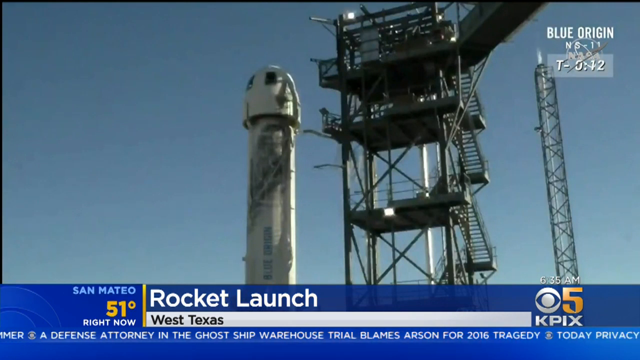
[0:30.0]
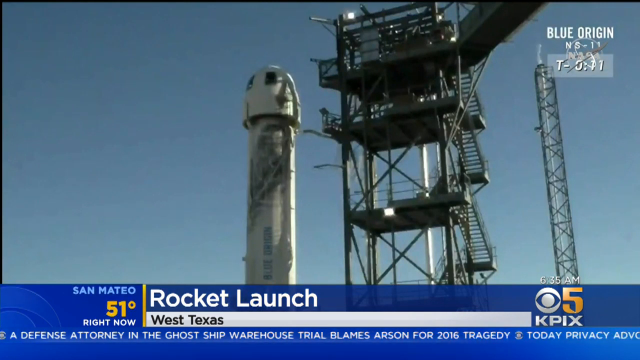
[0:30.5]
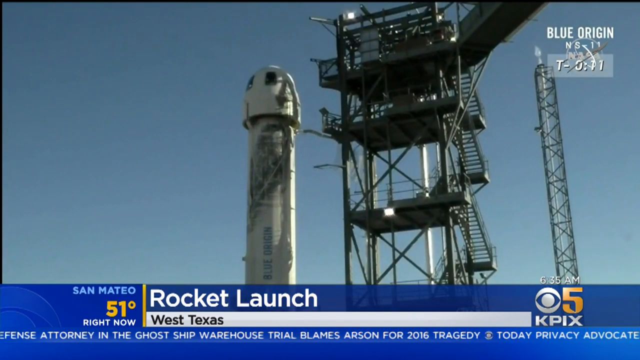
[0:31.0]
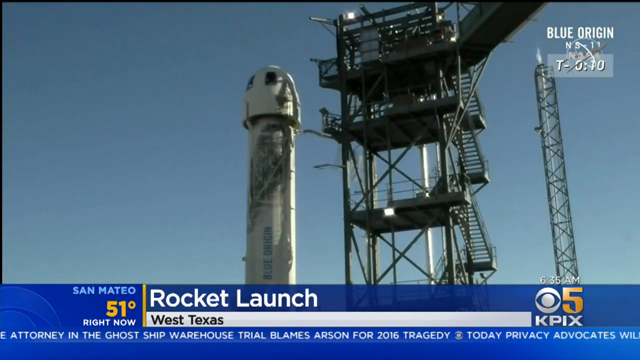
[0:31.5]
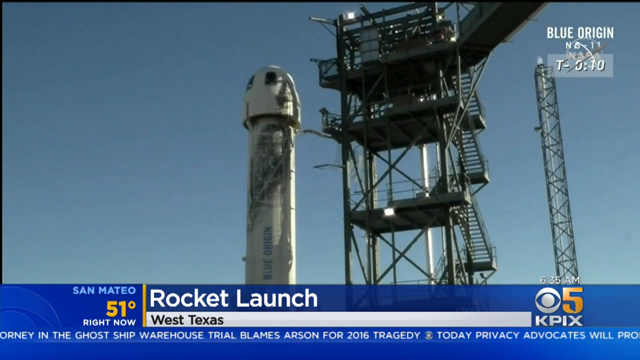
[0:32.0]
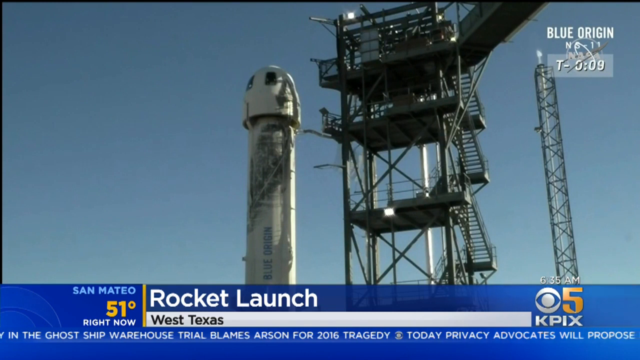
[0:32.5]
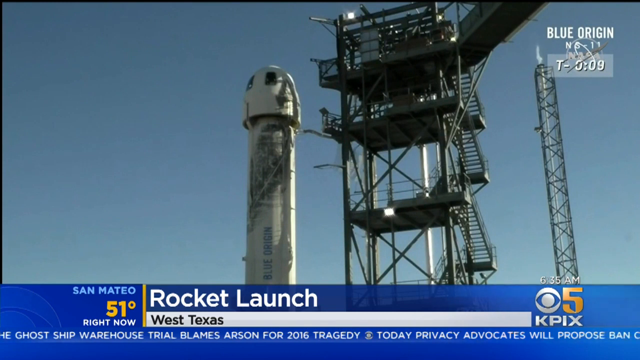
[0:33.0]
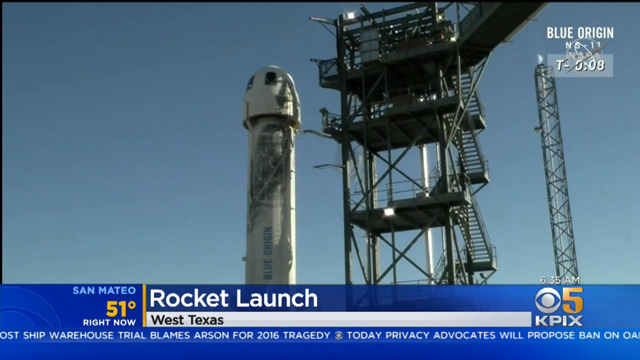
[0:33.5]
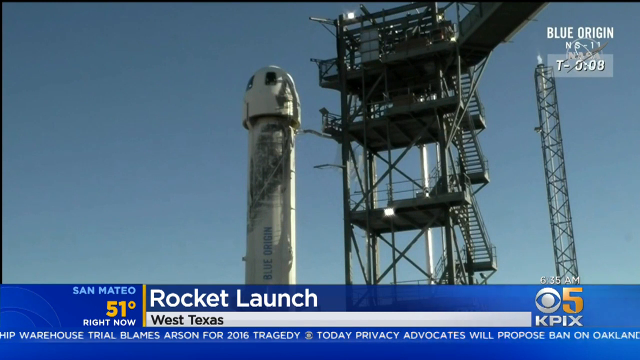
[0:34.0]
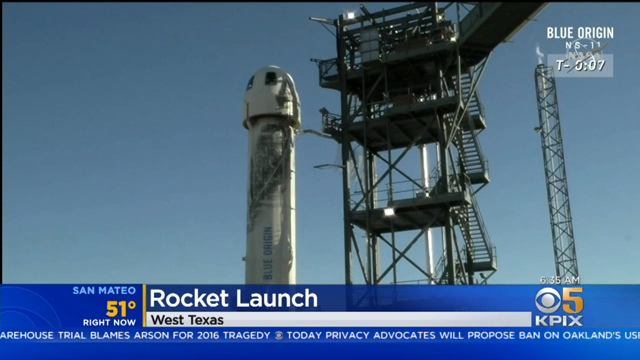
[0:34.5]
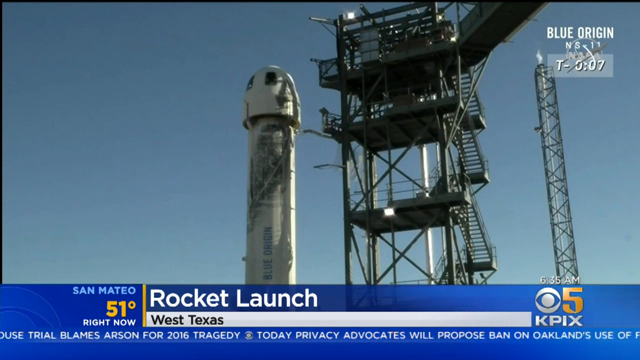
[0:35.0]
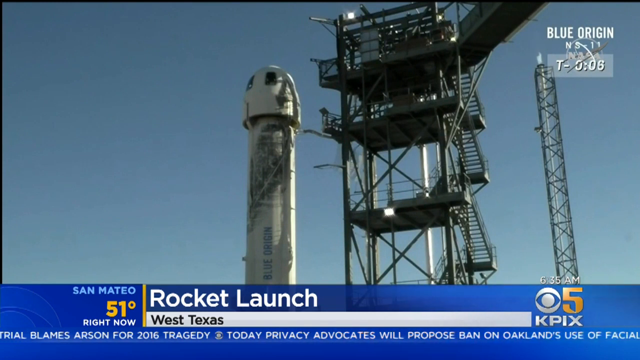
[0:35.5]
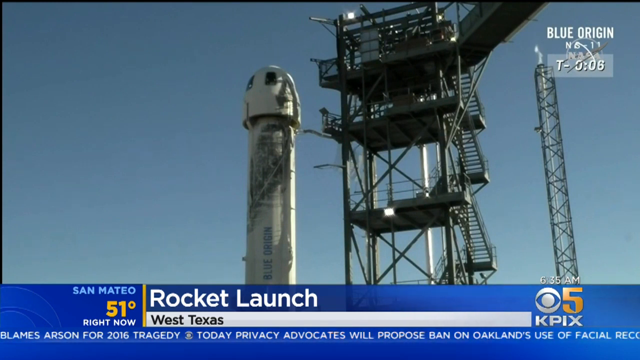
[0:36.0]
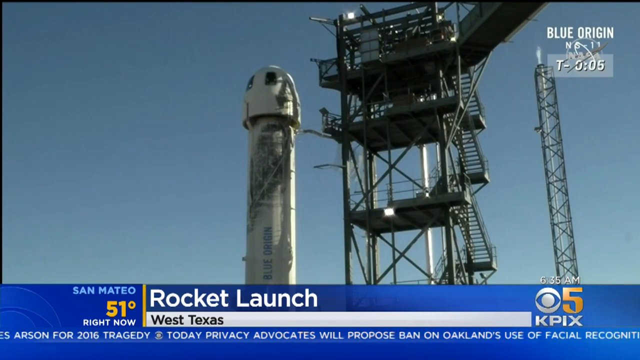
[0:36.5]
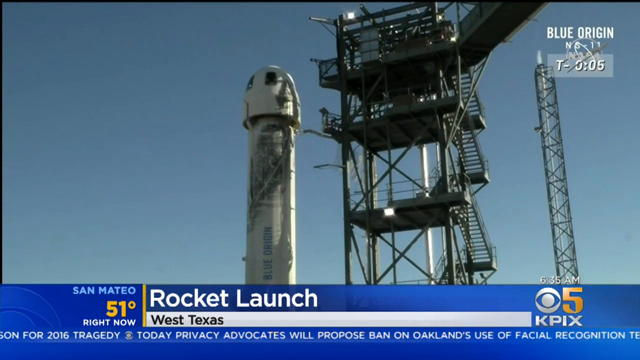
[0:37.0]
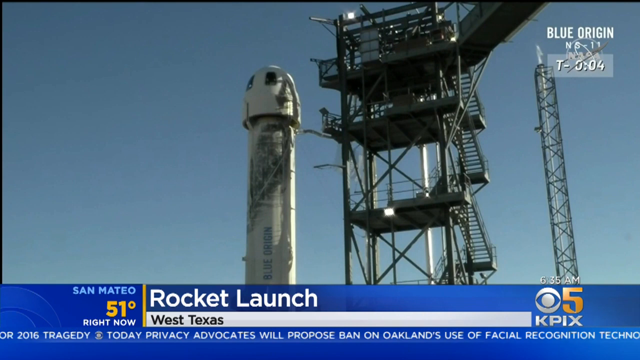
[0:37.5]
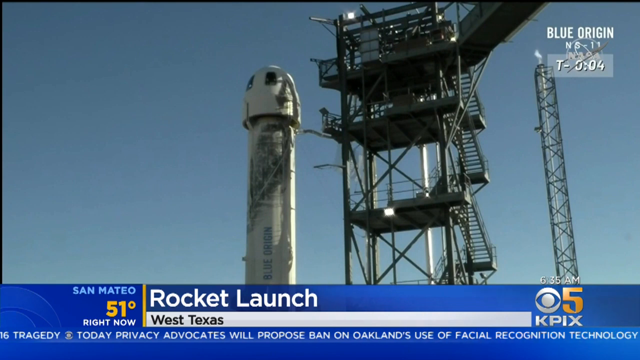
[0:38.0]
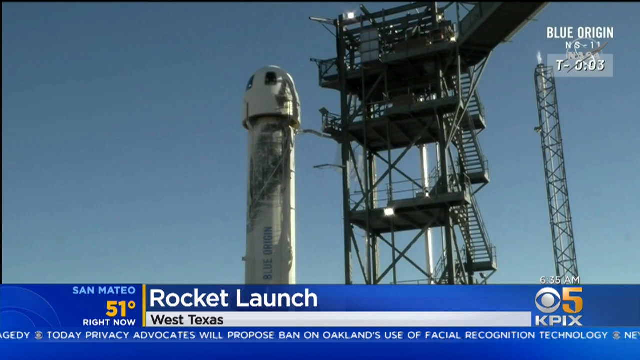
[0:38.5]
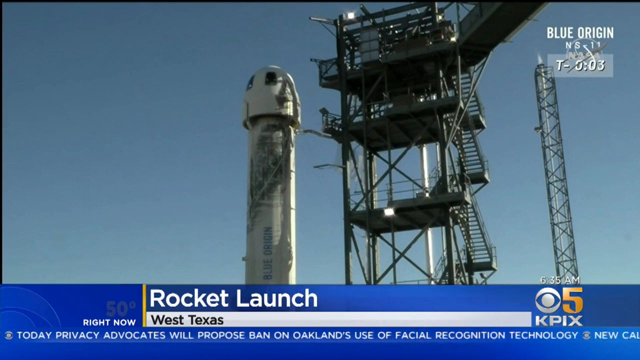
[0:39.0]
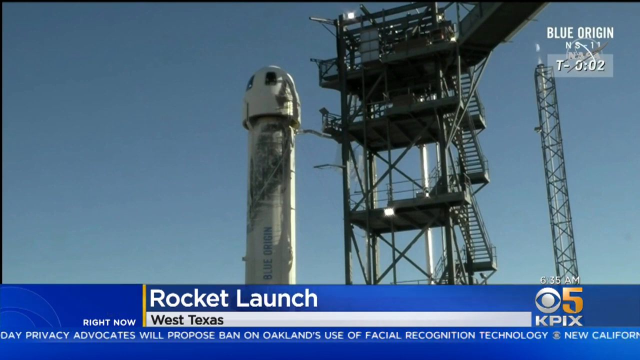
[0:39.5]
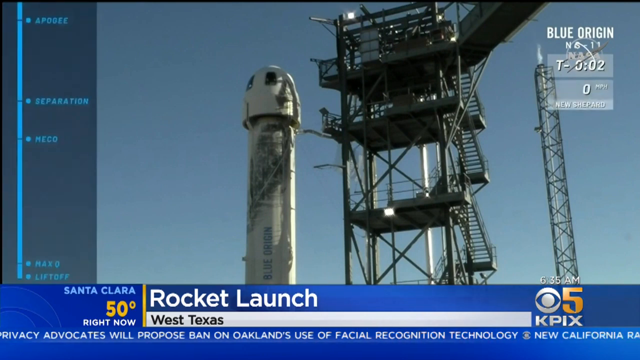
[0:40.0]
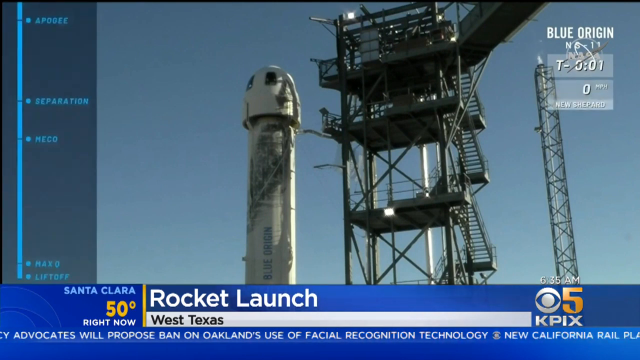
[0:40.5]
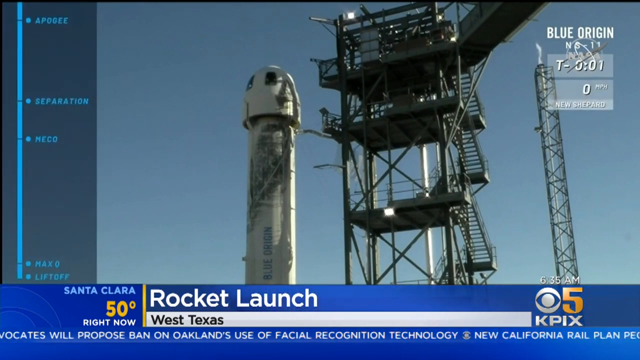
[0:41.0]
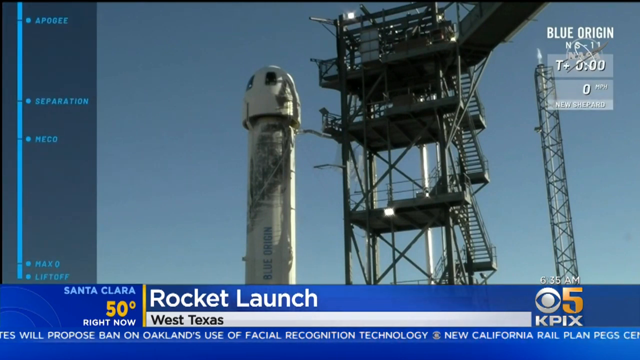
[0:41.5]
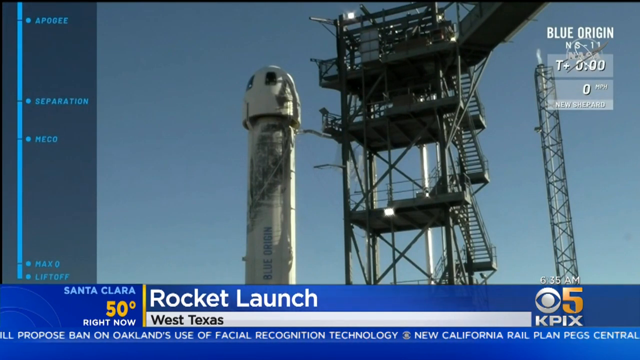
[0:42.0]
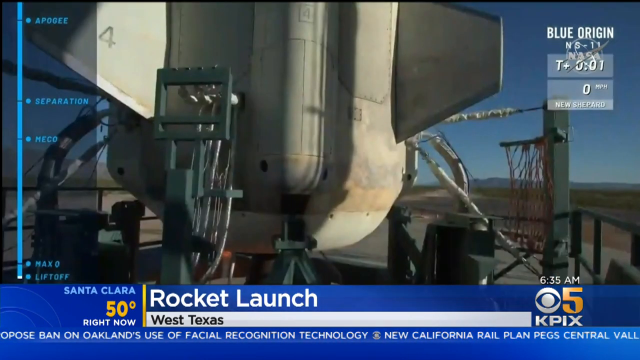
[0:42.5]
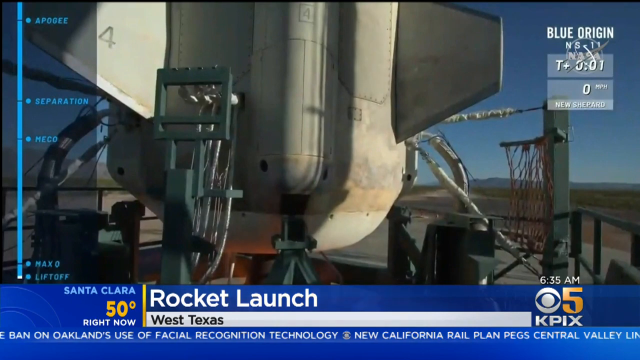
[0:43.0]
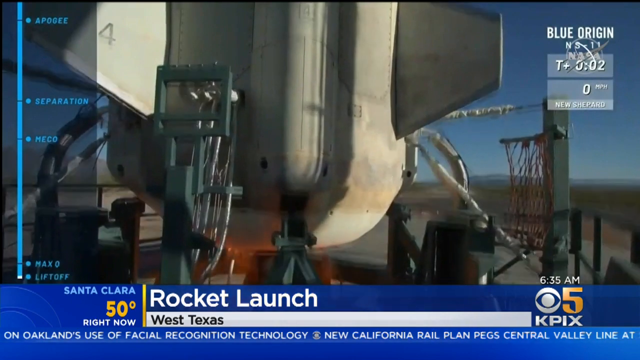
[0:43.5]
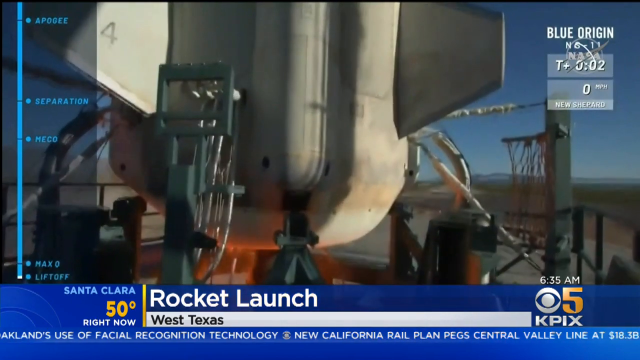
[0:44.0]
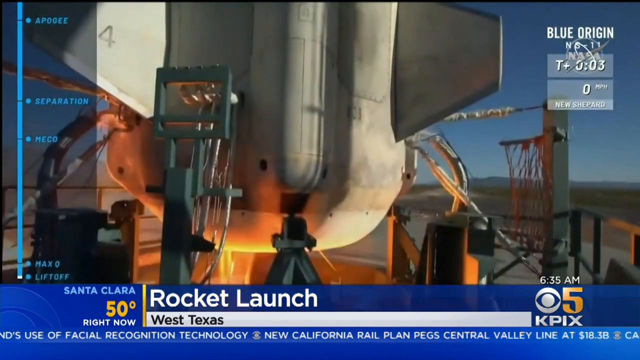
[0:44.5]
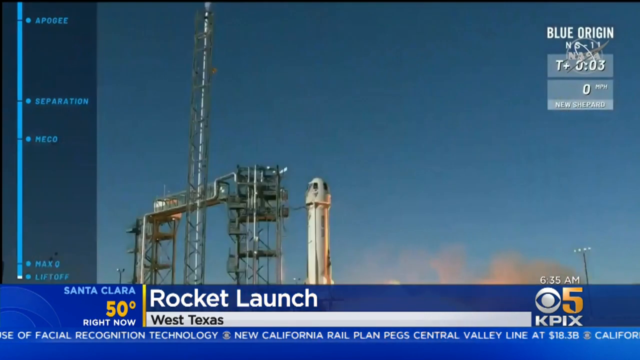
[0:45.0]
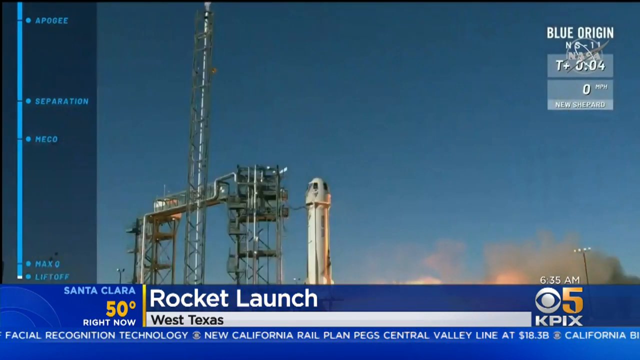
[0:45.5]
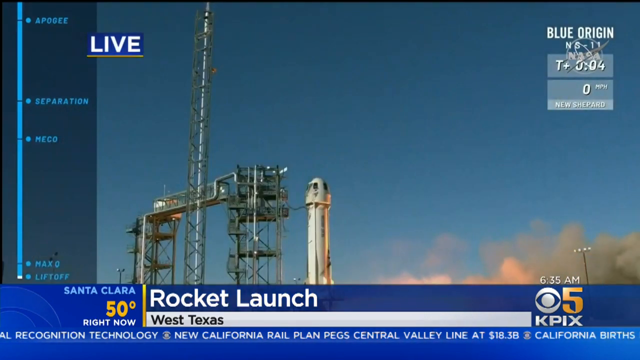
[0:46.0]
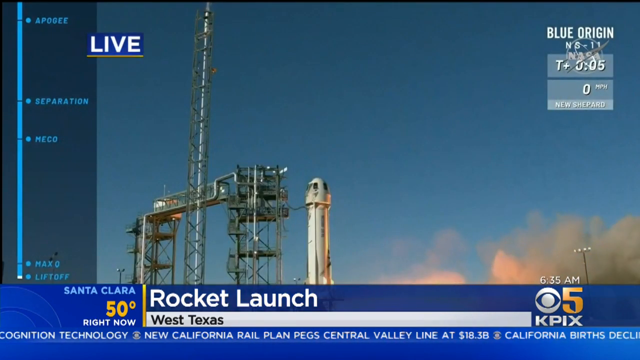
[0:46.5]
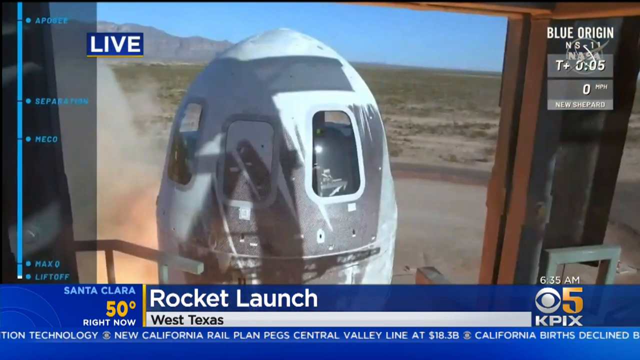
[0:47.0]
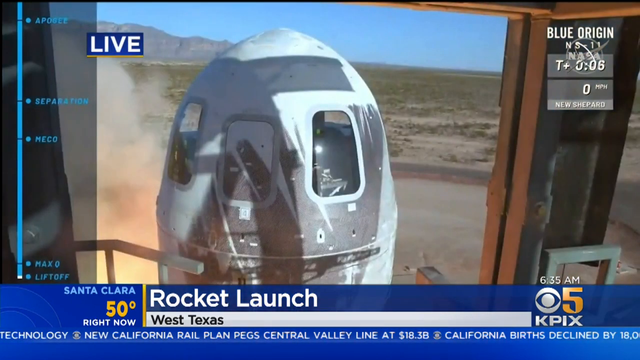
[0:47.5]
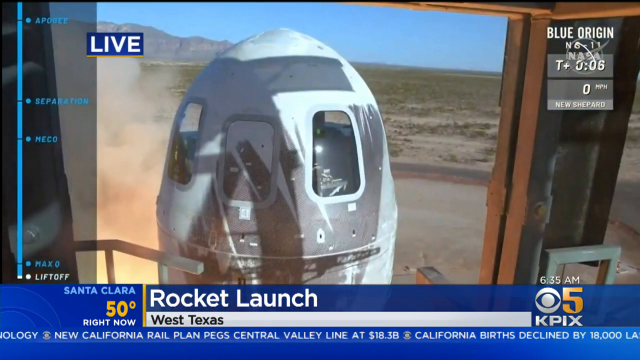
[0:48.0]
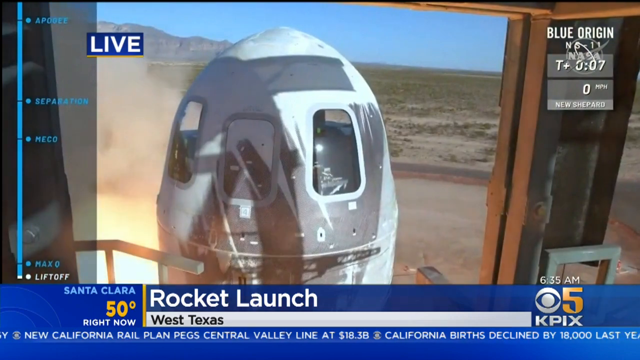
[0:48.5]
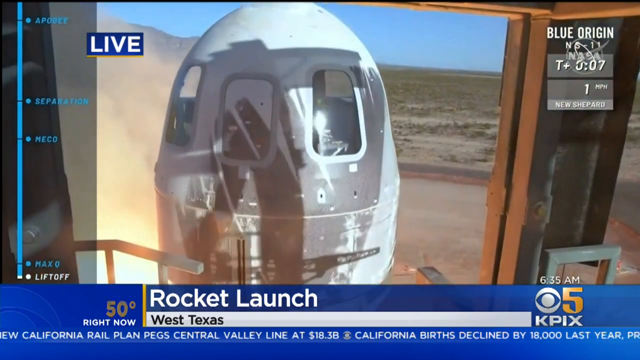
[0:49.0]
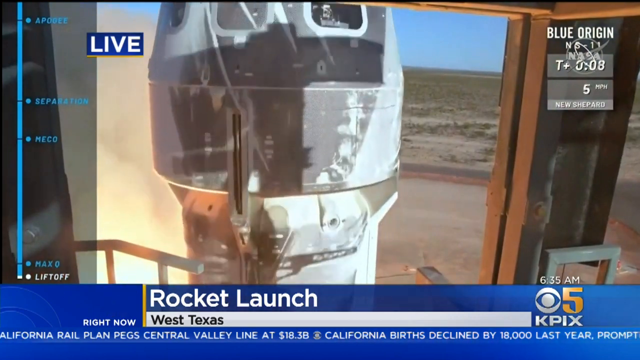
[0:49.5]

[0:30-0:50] The top of the rocket ship is shown, and beside it is a set of floors with green stairs leading to each floor, built next to the rocket ship. On the left side of the screen a blue box appears containing what appears to be some type of chart; starting from the bottom, it reads "lift-off," "max-q," "meco," "separation" and "apogee." A fire appears to ignite at the bottom of the rocket, flames shoot out of the bottom, and smoke rises. A close-up shot of the top of the rocket shows it appearing to finally lift off, with a clear blue sky in the background.